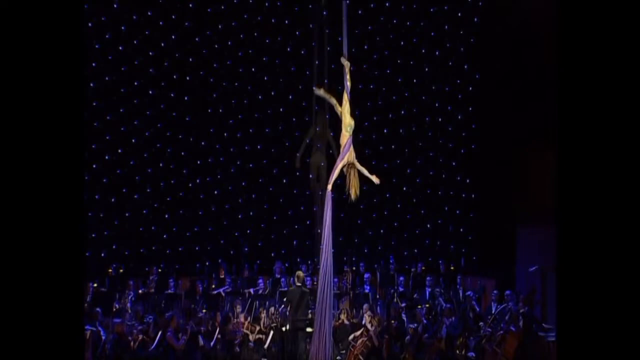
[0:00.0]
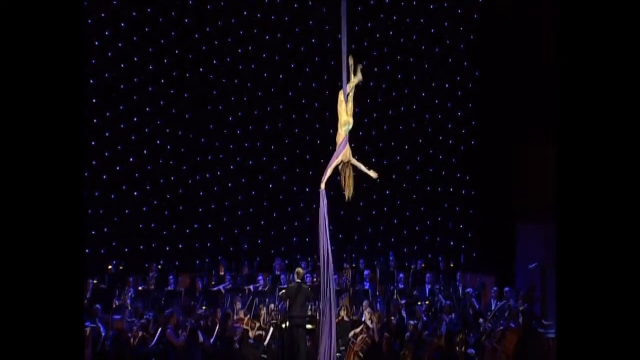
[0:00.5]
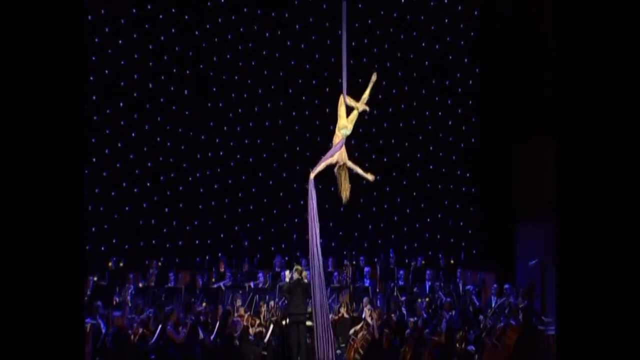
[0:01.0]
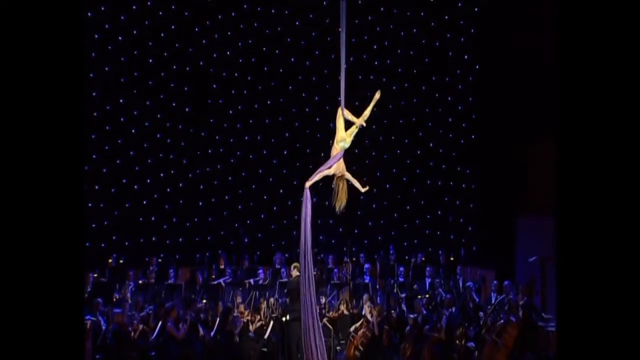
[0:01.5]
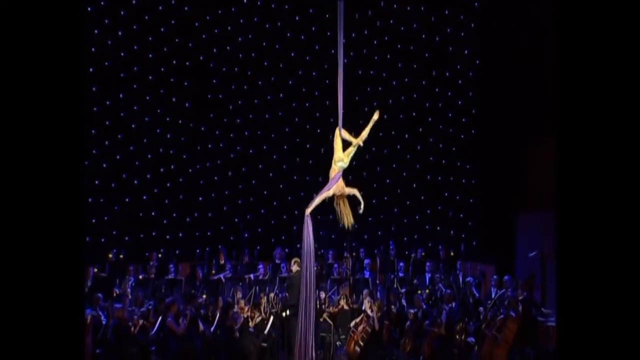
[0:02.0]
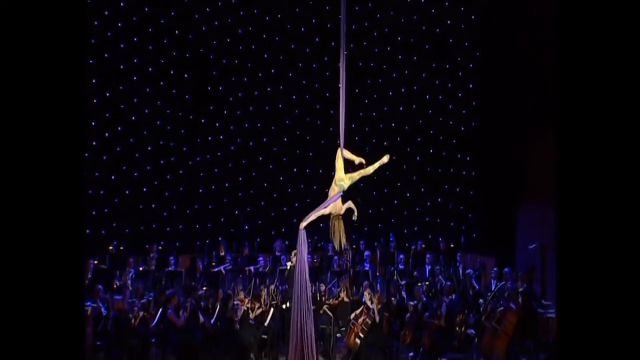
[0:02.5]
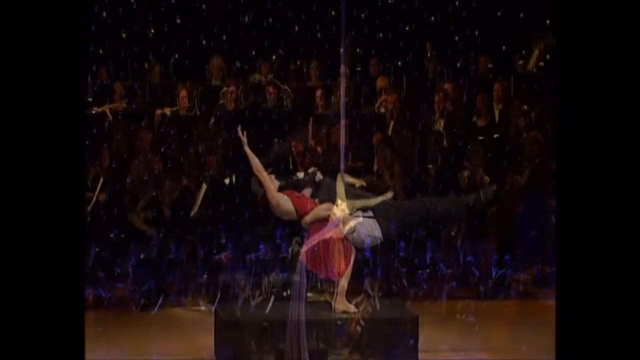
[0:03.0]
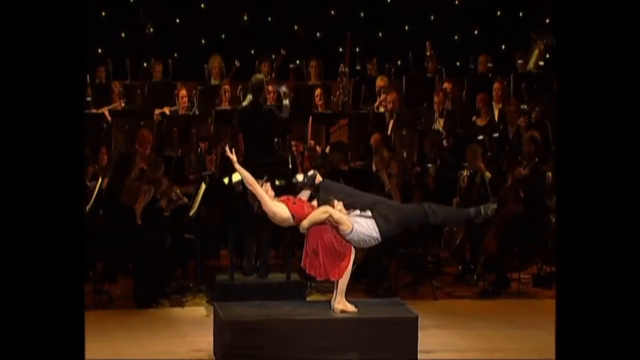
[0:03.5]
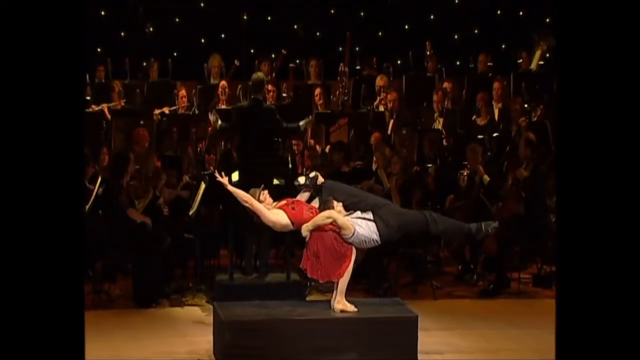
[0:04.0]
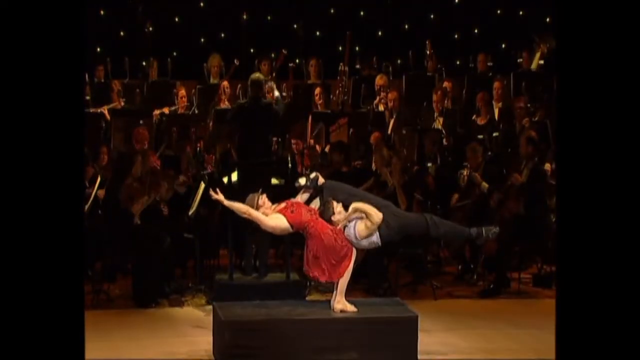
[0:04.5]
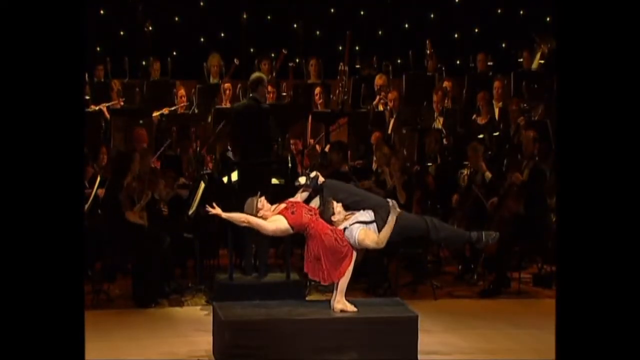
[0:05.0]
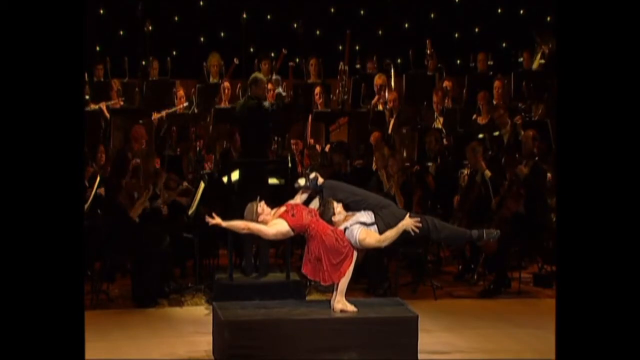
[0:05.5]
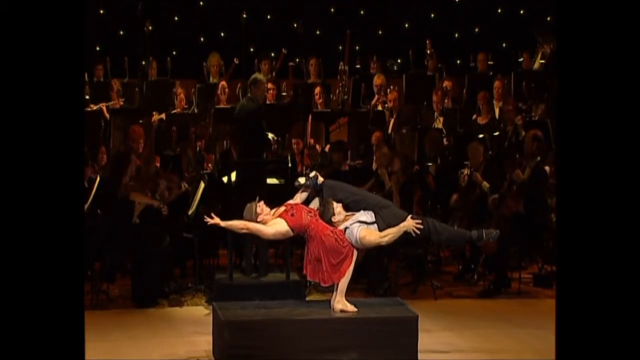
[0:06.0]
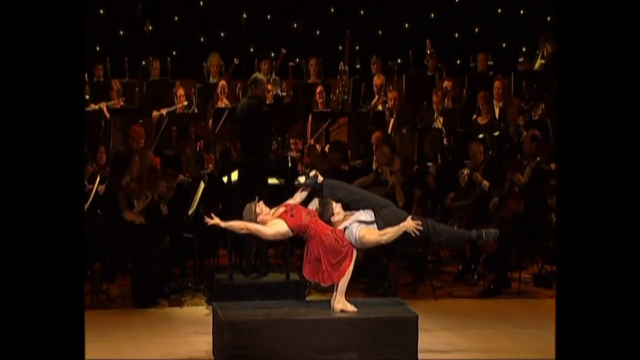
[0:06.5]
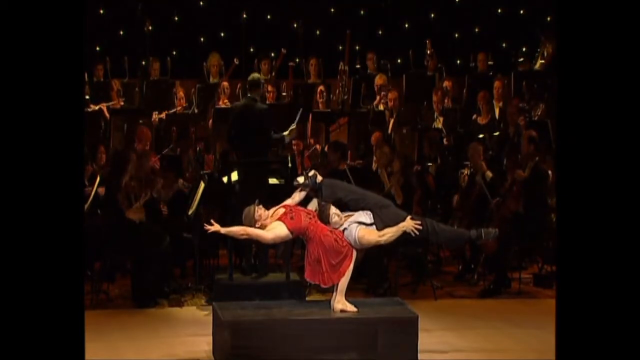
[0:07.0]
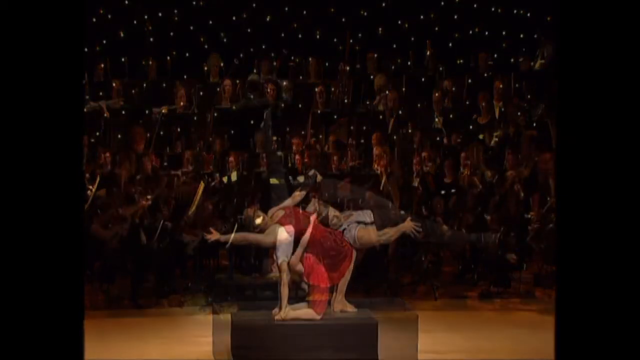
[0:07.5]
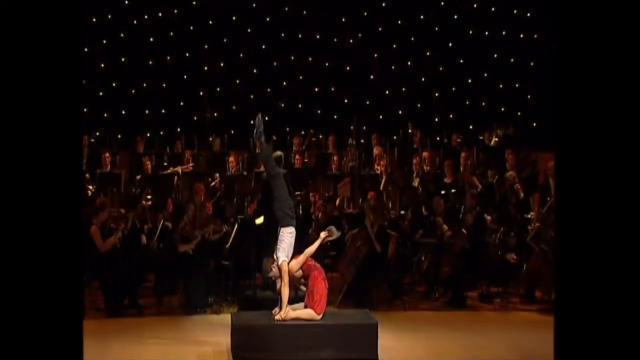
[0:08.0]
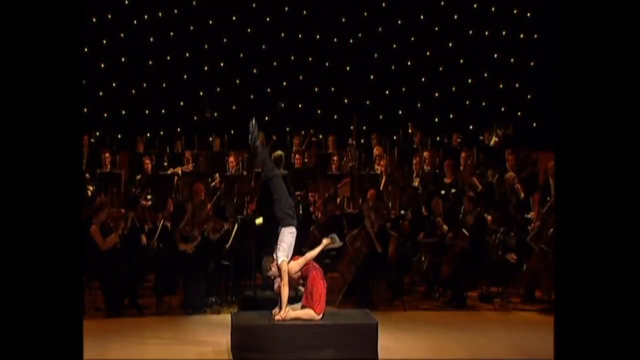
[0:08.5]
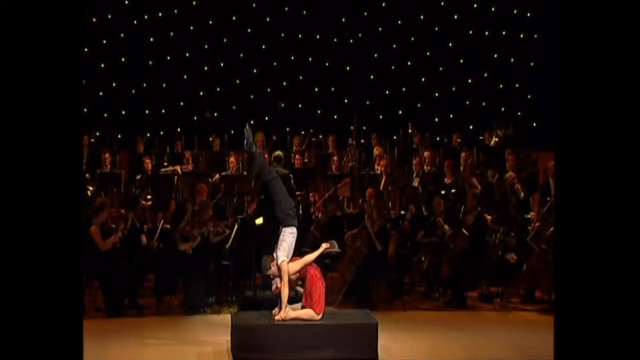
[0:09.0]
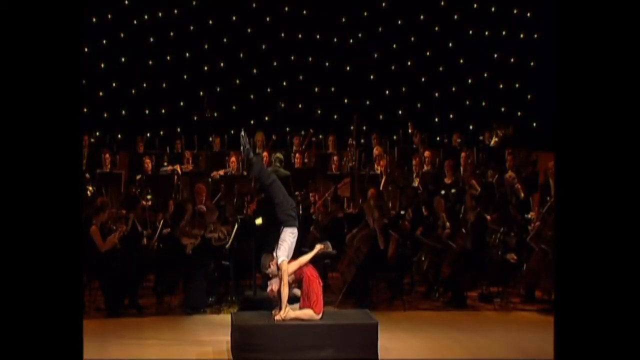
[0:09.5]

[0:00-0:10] Against a completely black, dark background, some lights illuminate an orchestra with various instruments and its conductor guiding them. An acrobatic woman hangs from the ceiling and comes down from it on an elongated ribbon that is blue, perhaps purple. Several circular lights in tones ranging from blue to a little yellow cover the ceiling and walls. The woman is later seen alongside a man, performing very complicated demonstrations.